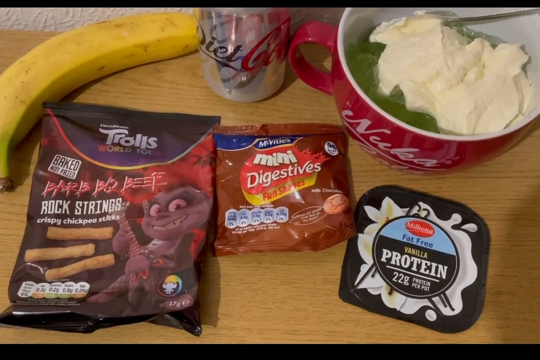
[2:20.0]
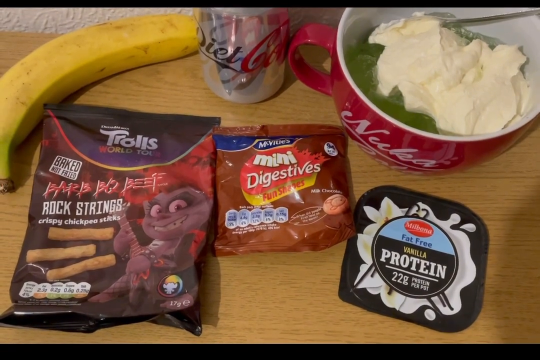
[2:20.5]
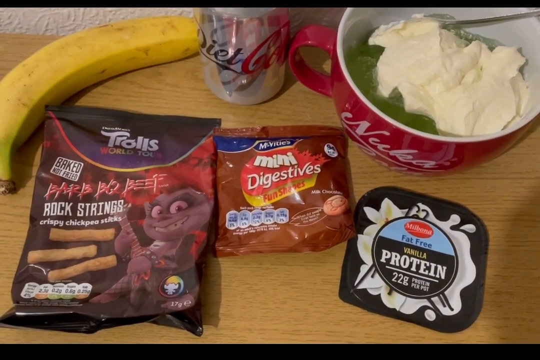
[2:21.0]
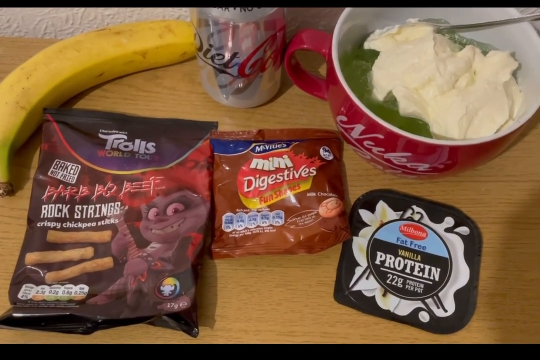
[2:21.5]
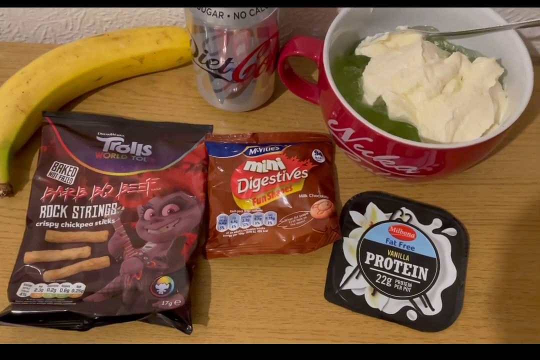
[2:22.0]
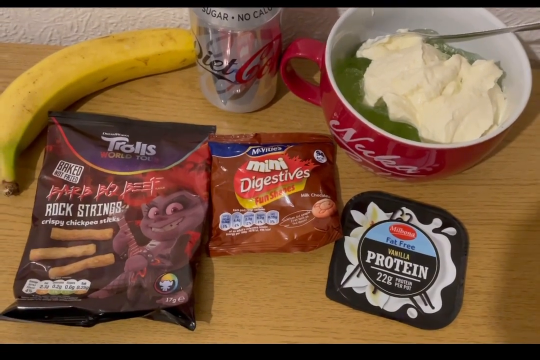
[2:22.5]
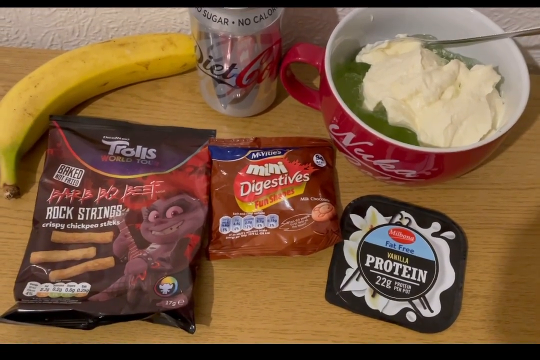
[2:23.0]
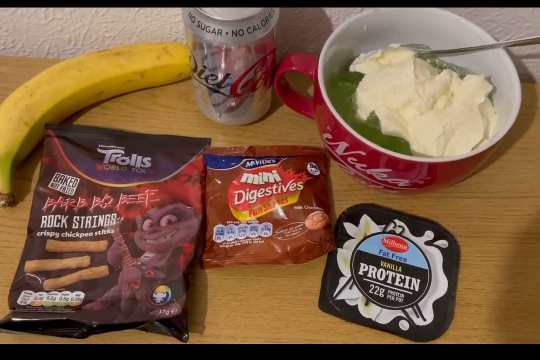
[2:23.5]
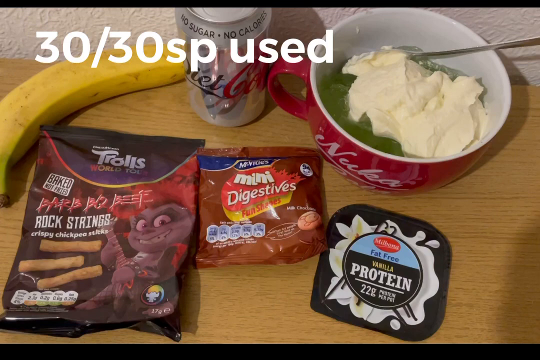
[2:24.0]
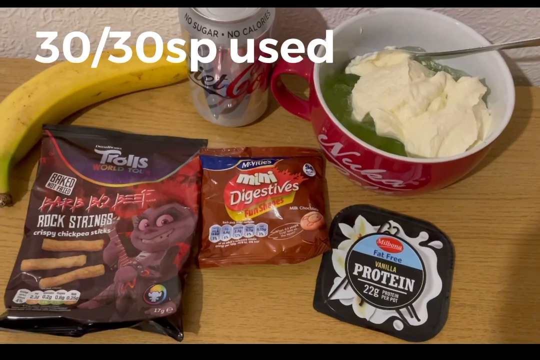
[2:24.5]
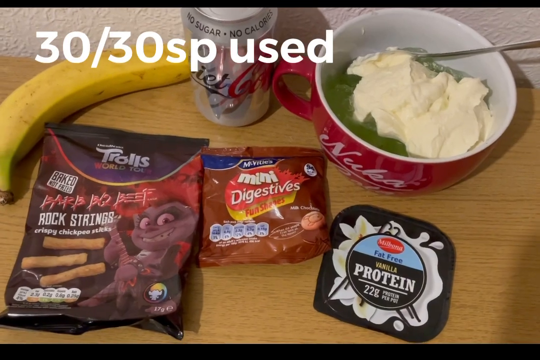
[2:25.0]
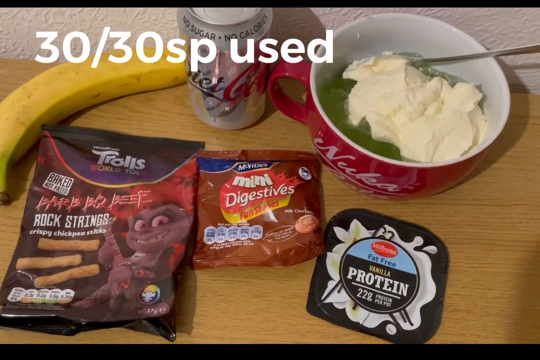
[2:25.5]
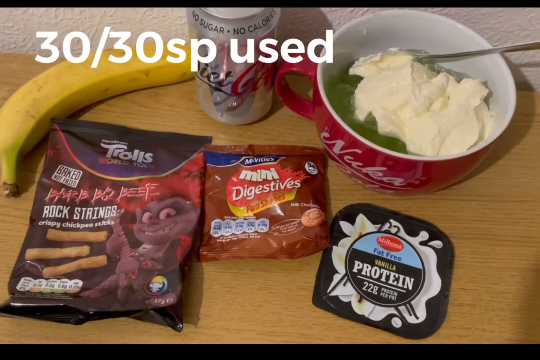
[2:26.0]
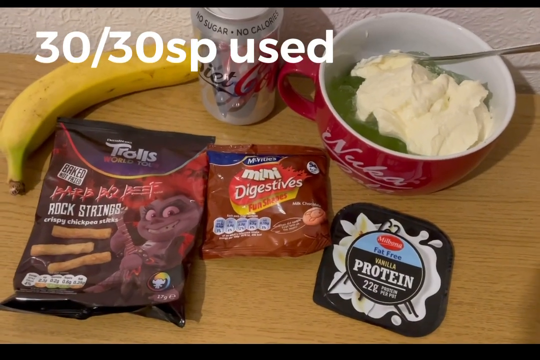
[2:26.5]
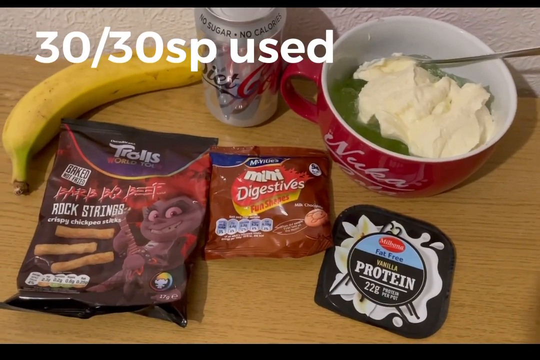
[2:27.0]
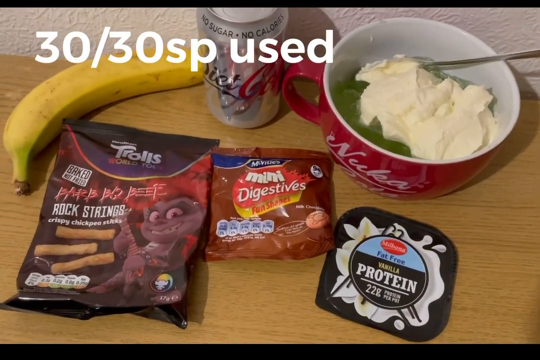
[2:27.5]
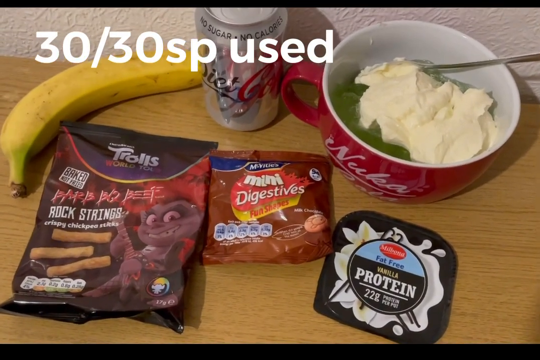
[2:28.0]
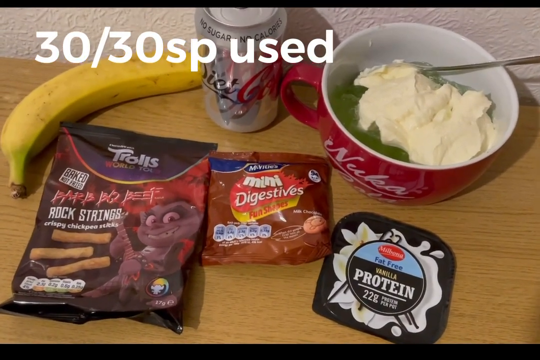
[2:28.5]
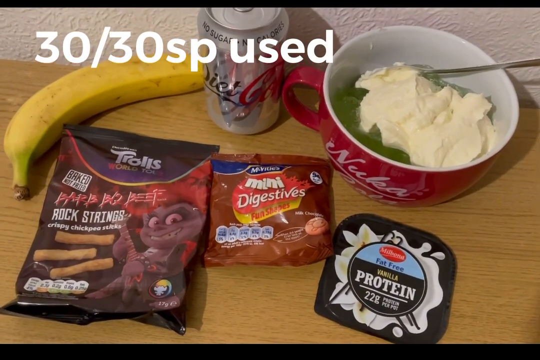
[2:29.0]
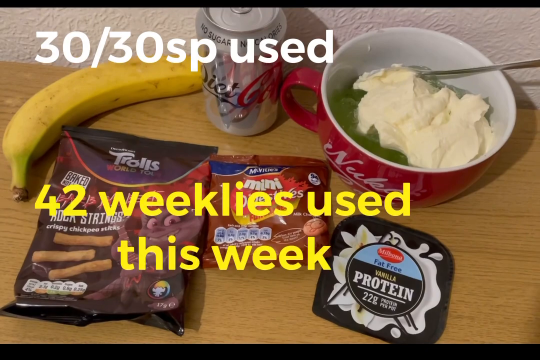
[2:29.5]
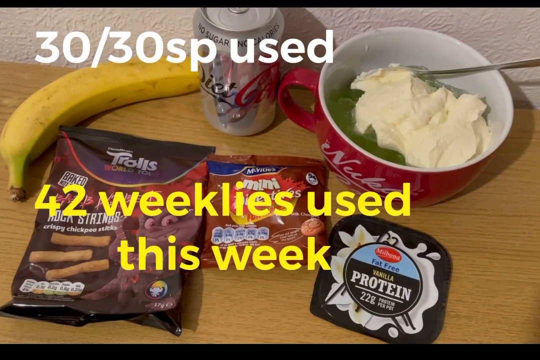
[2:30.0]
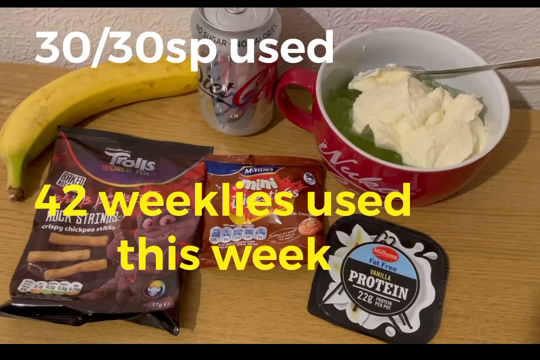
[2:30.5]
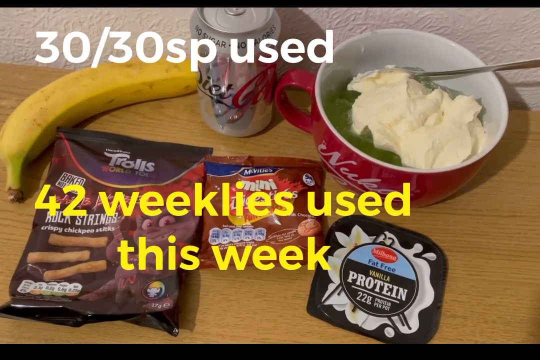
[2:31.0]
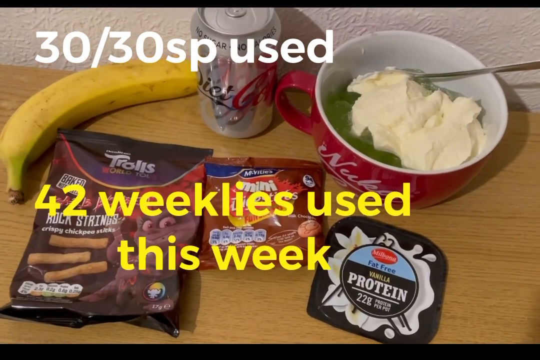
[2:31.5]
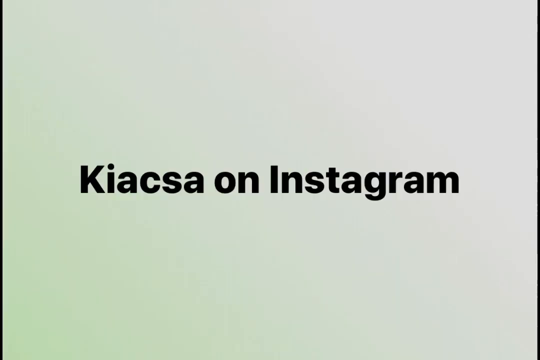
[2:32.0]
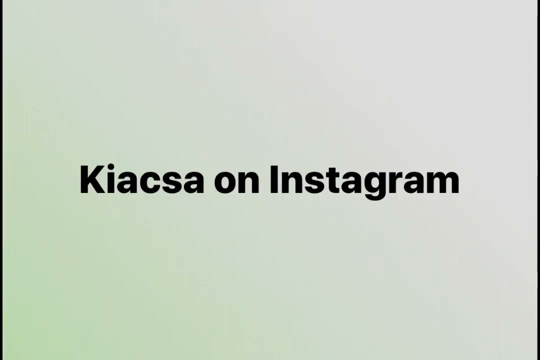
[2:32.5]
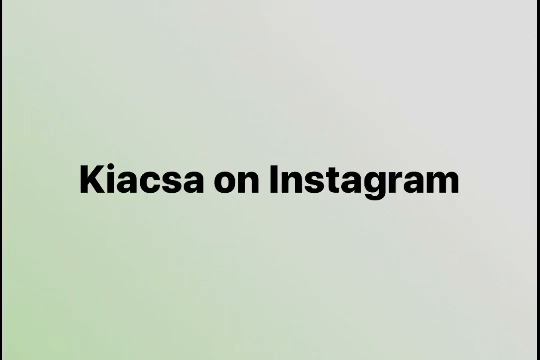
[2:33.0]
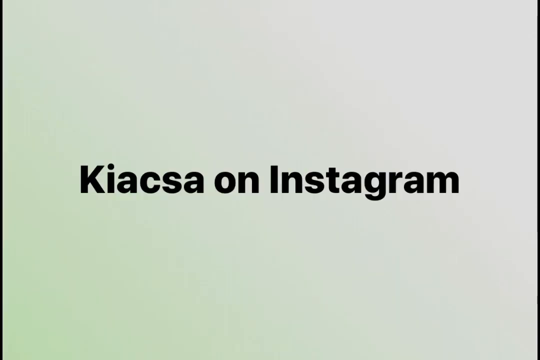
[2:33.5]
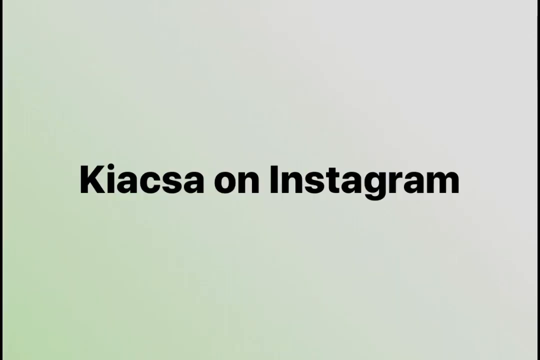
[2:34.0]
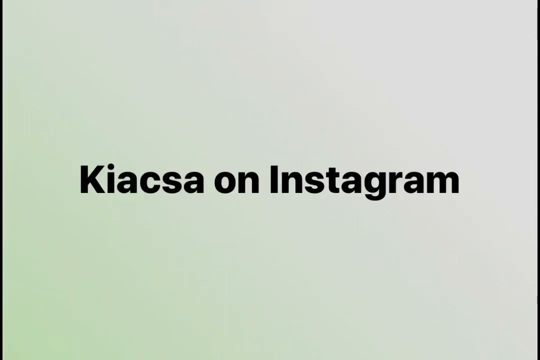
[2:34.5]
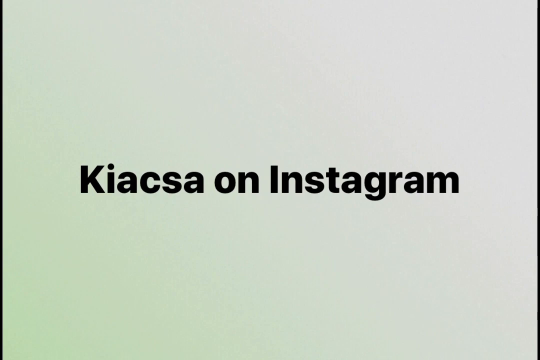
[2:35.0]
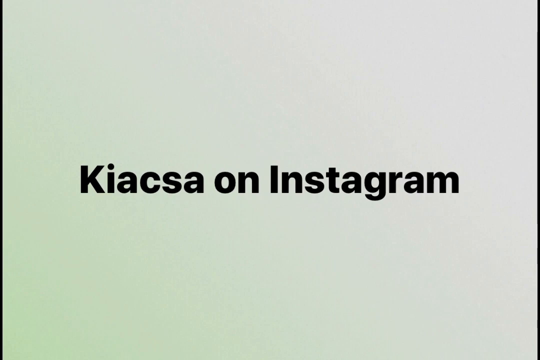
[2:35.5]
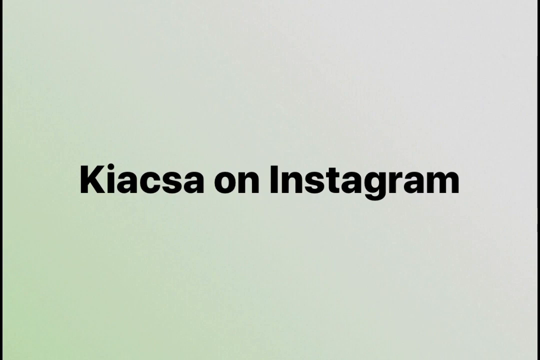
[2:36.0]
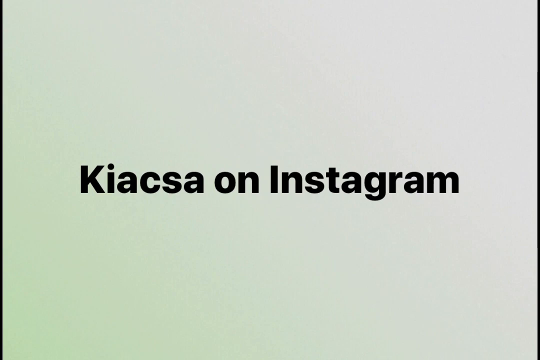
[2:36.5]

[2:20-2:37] The close-up of the snack treats on the worktop continues. Text appears at the top left of the screen in white font reading "30/30 SP used", and it remains on screen as the camera wobbles unsteadily. Further text then appears toward the bottom of the screen in yellow font across two lines, reading "42 weeklies used this week", across the Trolls and McVitie's digestives packets; the second line, "this week", runs from about halfway across the Trolls packet to the end of the McVitie's digestives packet. The video then moves to a lighter off-white screen that looks slightly green toward the bottom left corner and reads "KIACSA on Instagram". This screen ends the video.